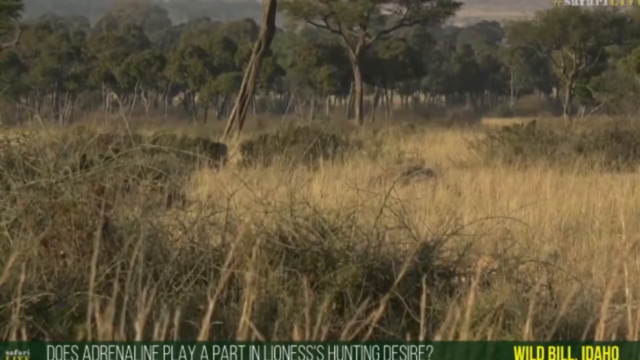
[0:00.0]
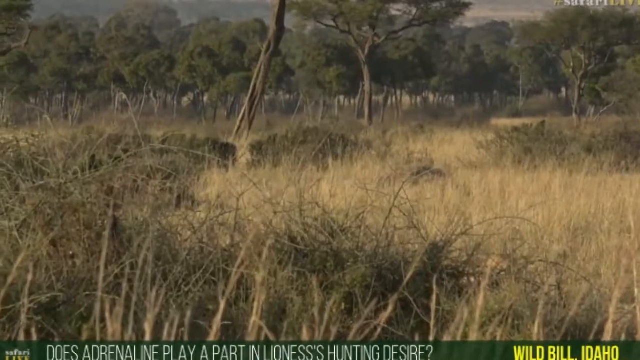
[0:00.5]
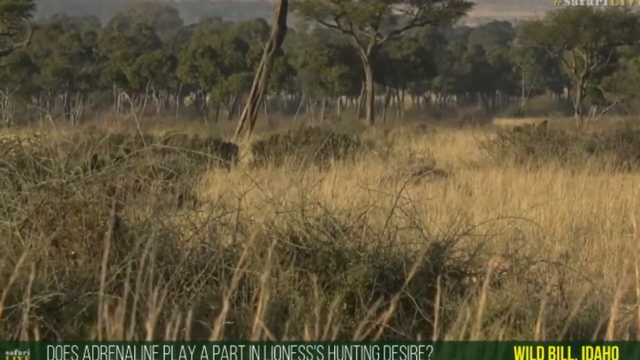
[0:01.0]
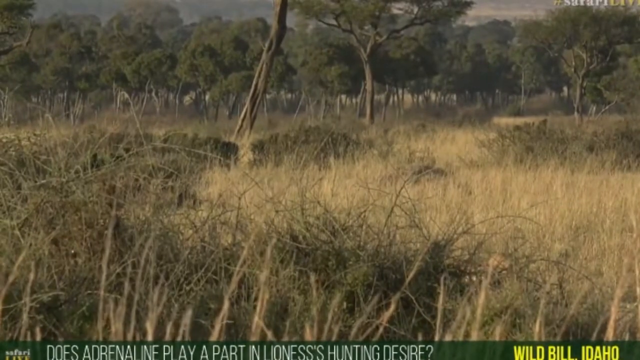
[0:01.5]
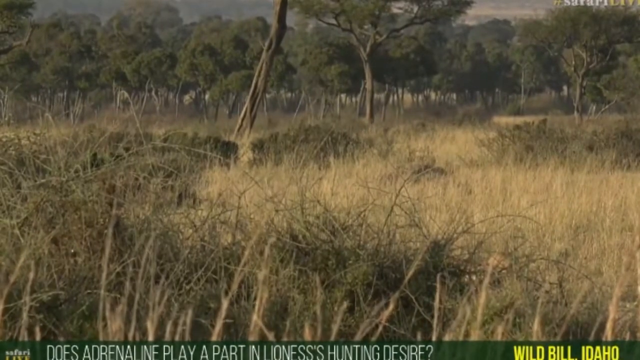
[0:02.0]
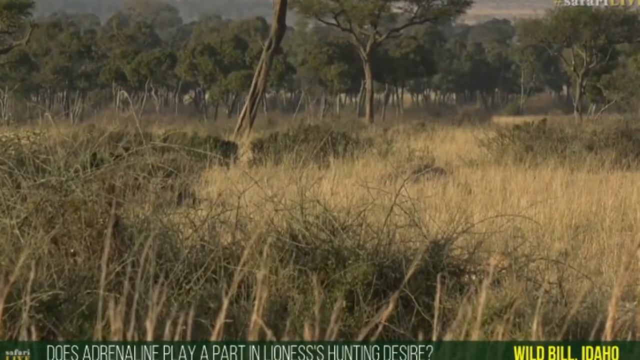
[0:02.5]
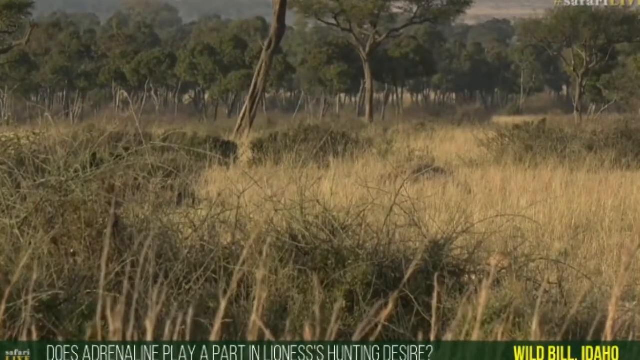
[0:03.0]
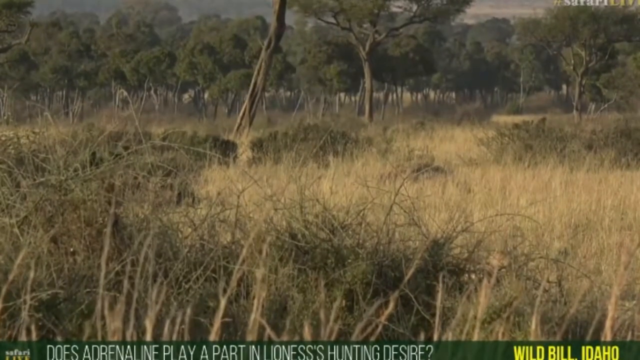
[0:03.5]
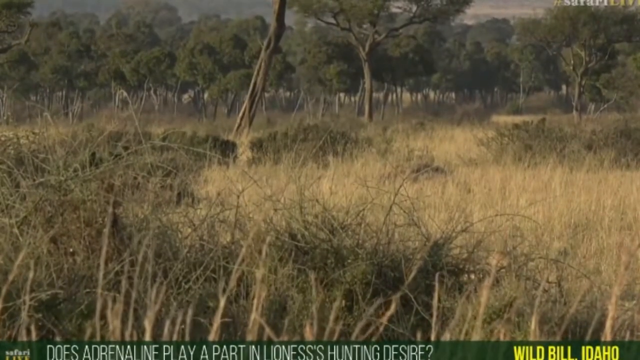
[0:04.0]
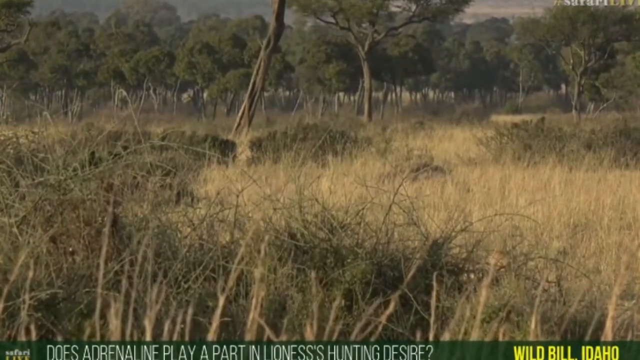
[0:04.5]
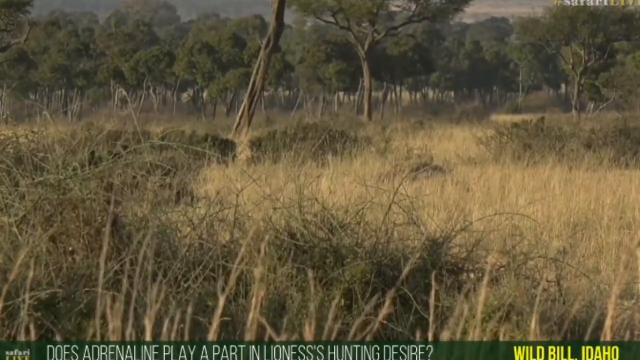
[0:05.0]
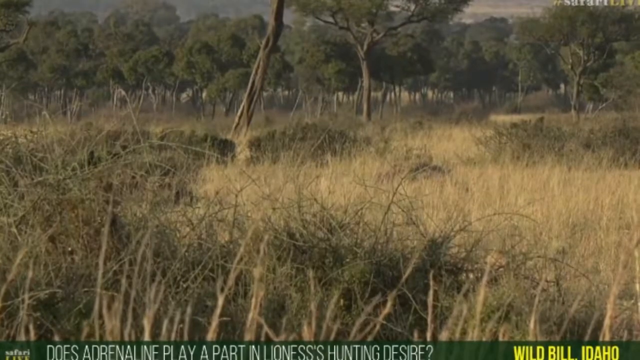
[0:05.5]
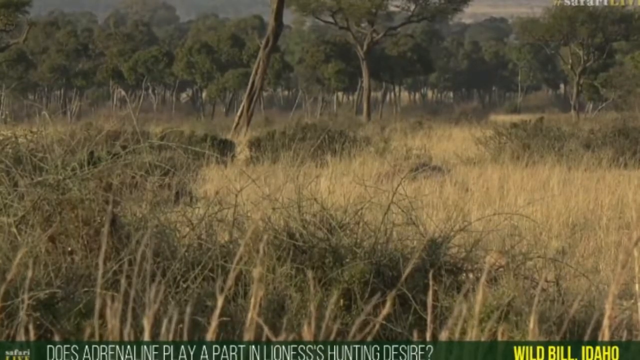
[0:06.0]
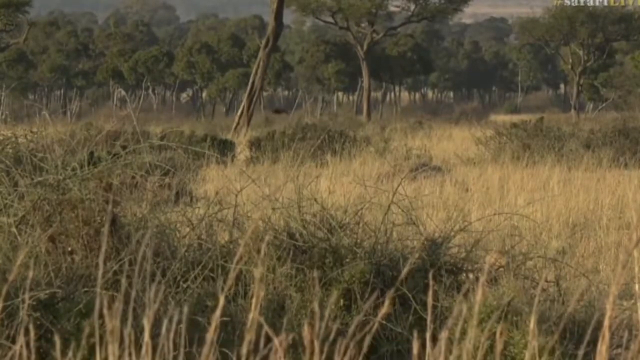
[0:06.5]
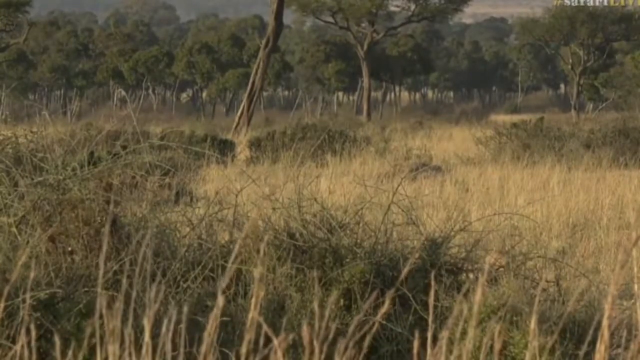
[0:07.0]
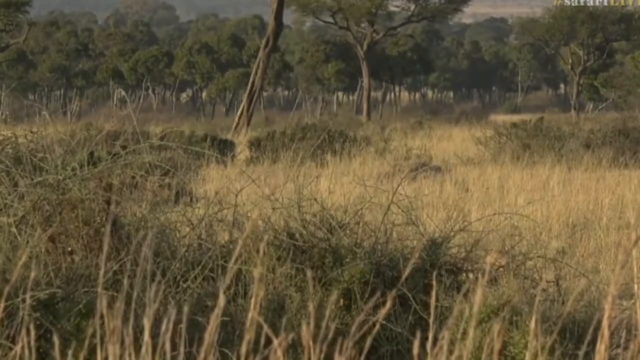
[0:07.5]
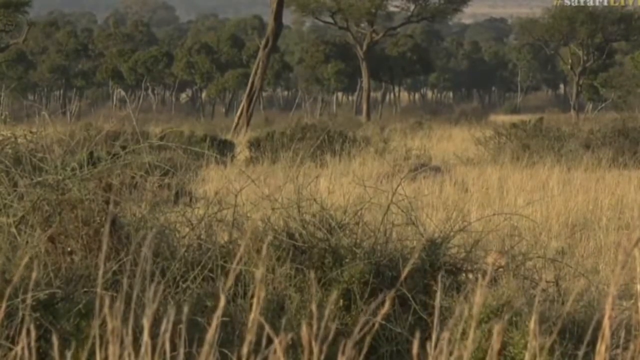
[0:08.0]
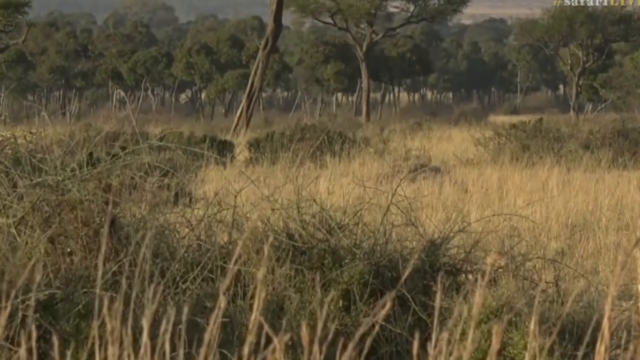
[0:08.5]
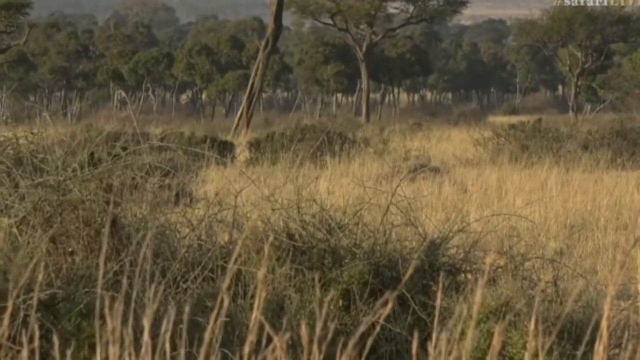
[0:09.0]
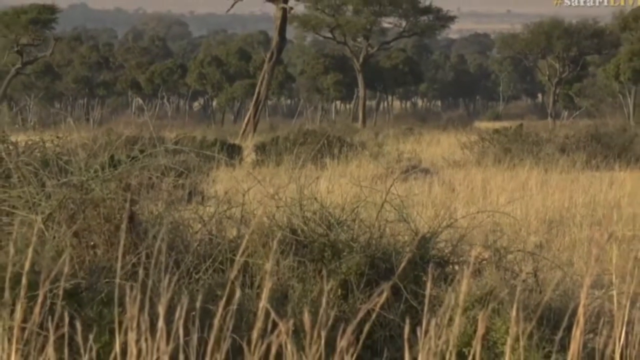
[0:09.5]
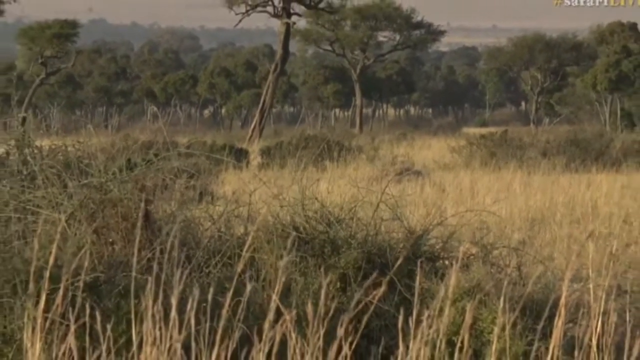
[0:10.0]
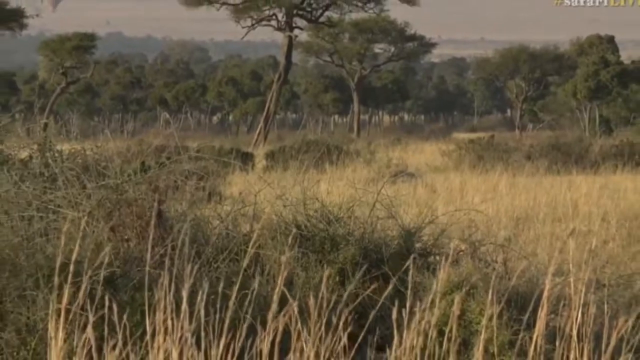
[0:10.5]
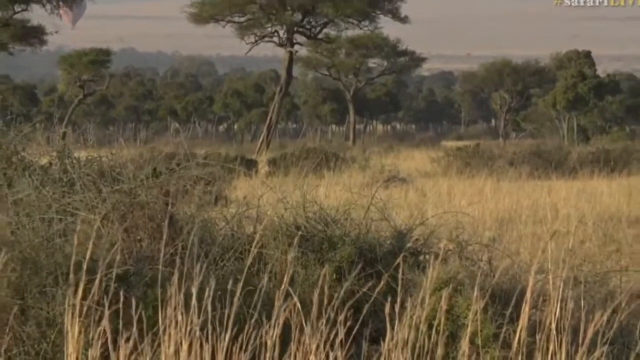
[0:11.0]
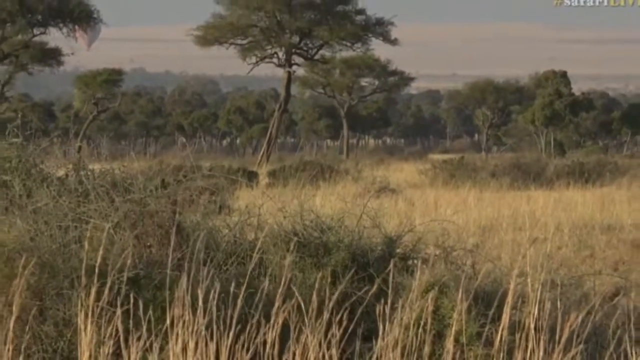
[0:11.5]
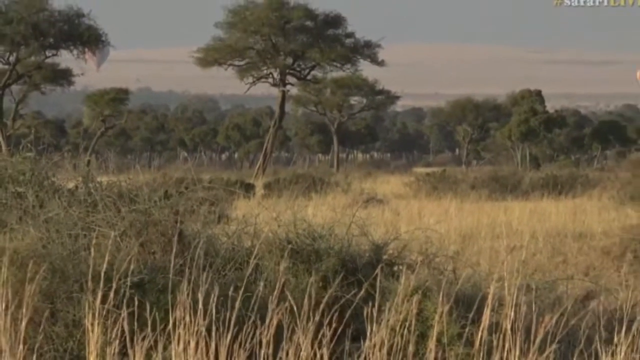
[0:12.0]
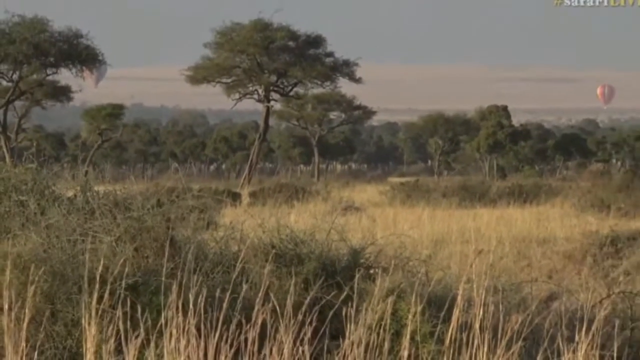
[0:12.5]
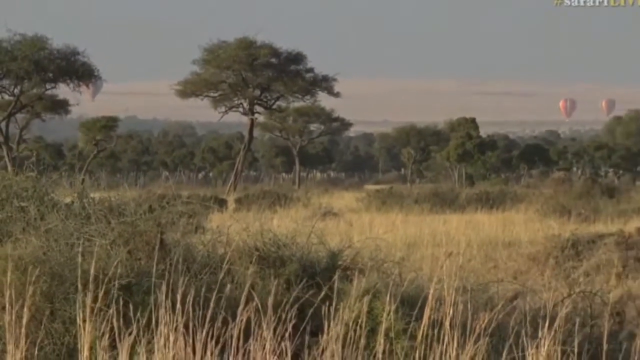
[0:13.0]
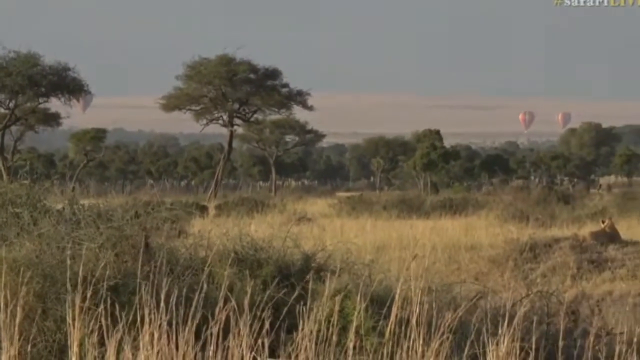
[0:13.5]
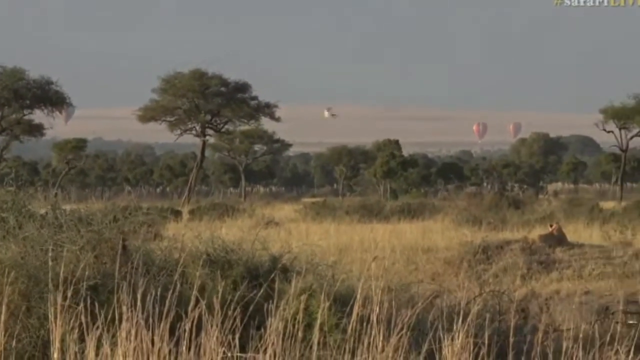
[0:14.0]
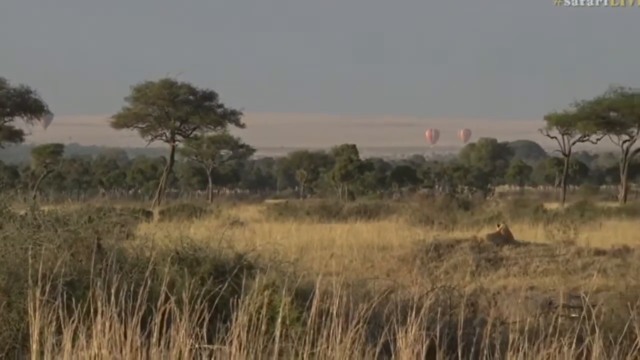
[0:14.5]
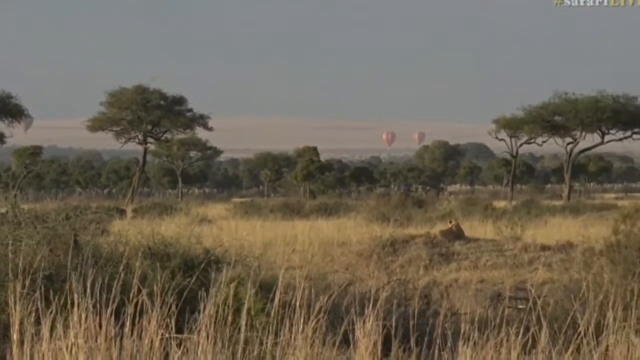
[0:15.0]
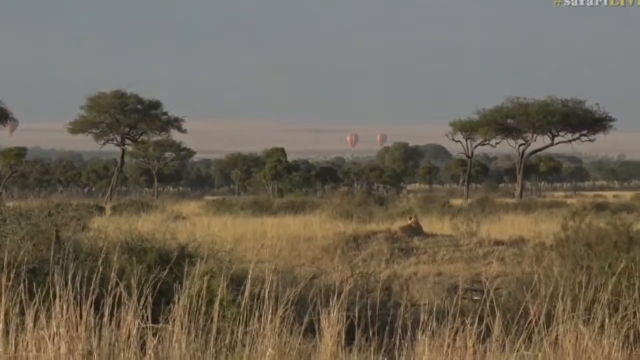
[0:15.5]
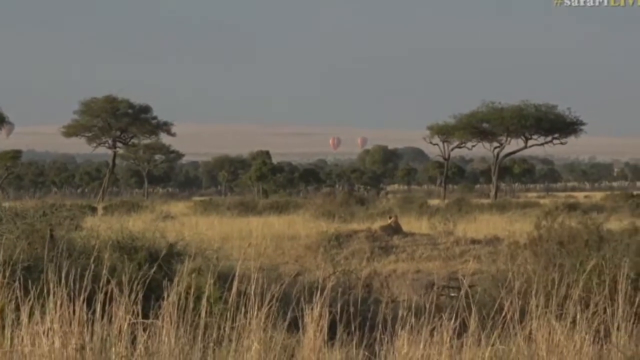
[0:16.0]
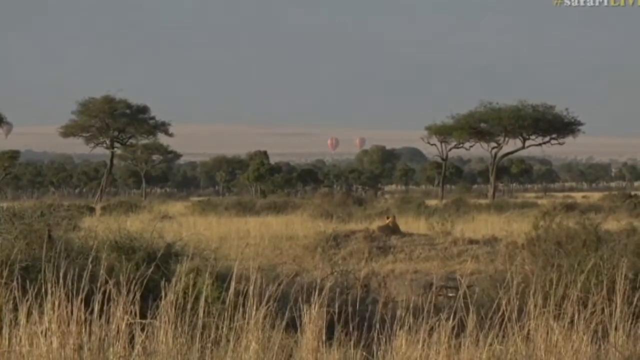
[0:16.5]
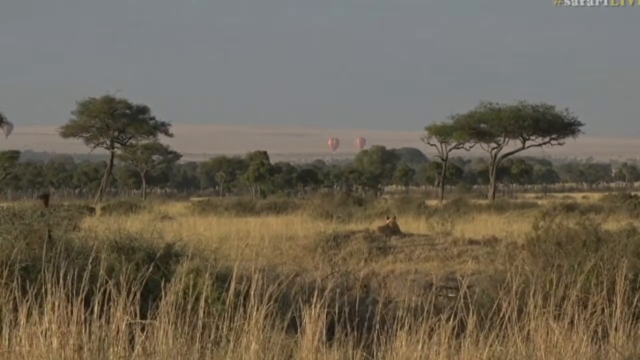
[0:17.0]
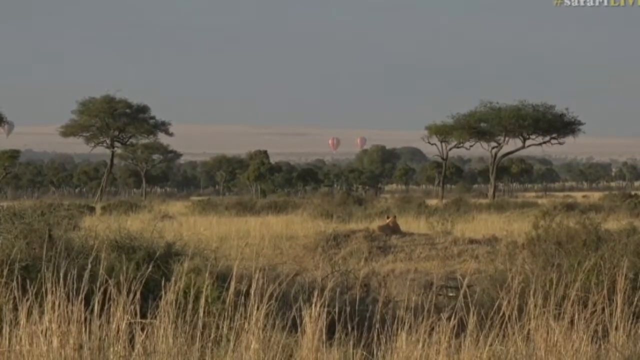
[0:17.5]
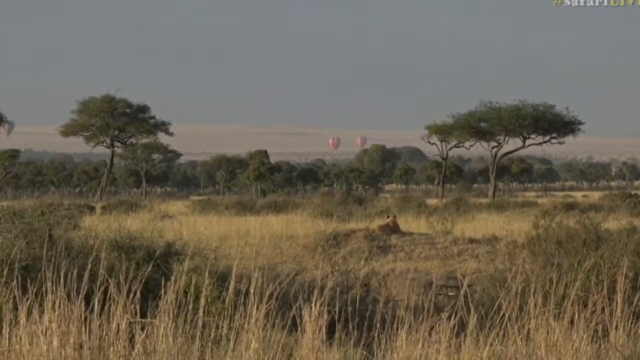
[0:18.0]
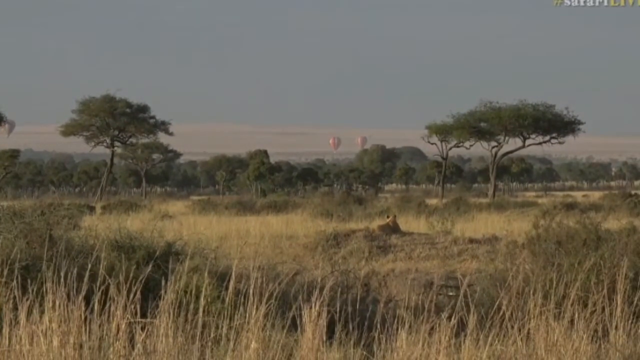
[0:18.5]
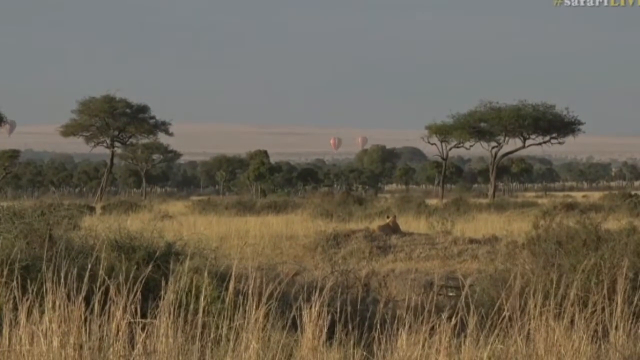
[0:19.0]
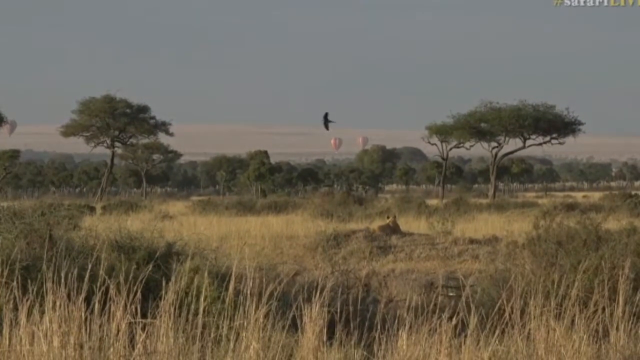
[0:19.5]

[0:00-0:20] An expansive outdoor scene looks like the Serengeti. There are plenty of trees, some of them stand-alone, and woods up on the horizon. The trees have long trunks, wide branches and flat tops, and some of them sort of lean. The clouds are low and dense but have no form to them; they are flat, and above them is a pale blue sky. In the right-hand corner is the word "safari". In the distance there are two red and white helium balloons of the kind that carry people. The vegetation nearby is dry and looks like hay, and the brush is dry as well. Small birds fly around; some are white and black with white wing tips, and there are also blackbirds. At the bottom a ticker reads "Does adrenaline play a part in lioness' hunting desire? Wild Bill, Idaho."